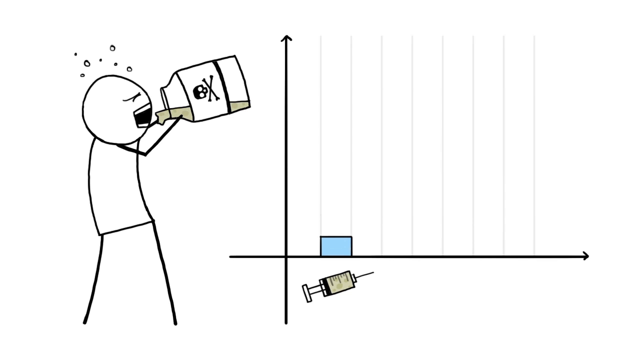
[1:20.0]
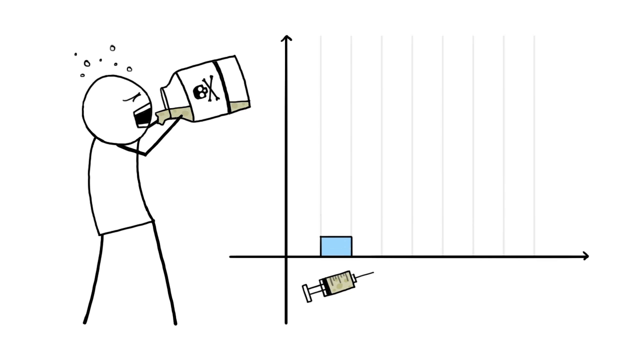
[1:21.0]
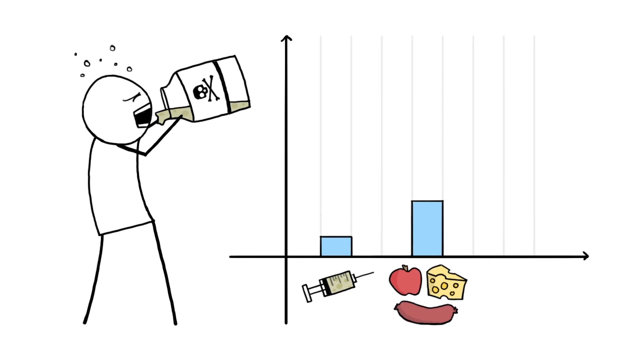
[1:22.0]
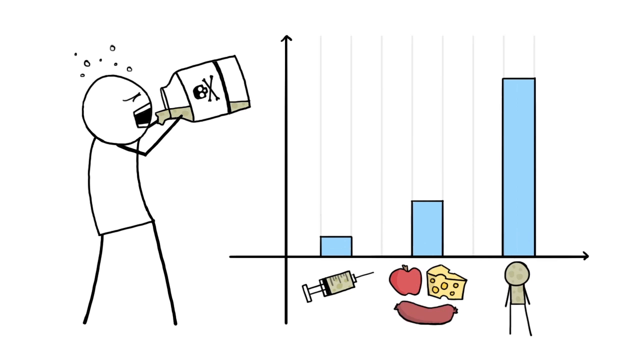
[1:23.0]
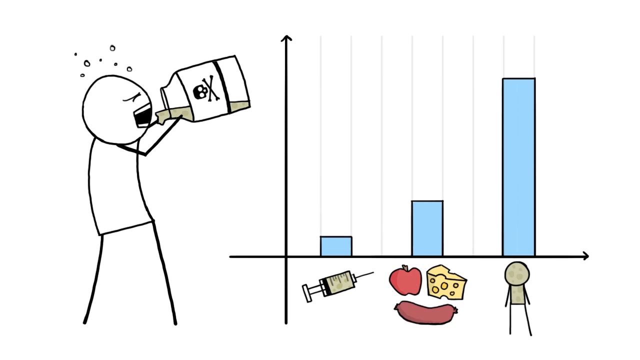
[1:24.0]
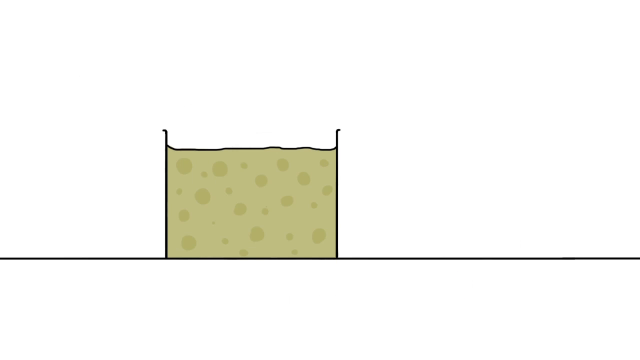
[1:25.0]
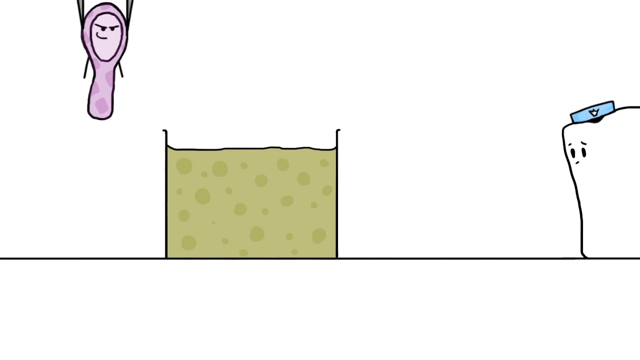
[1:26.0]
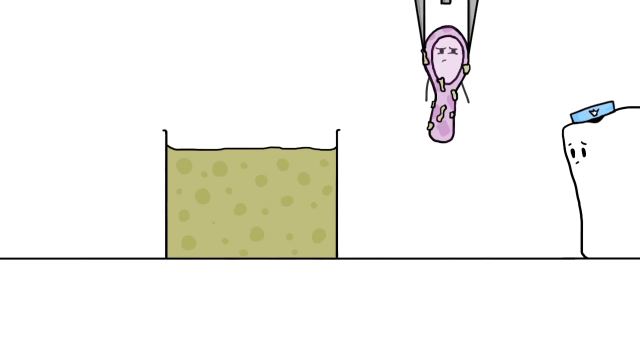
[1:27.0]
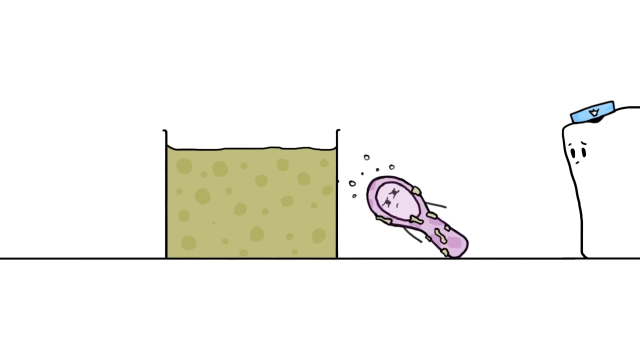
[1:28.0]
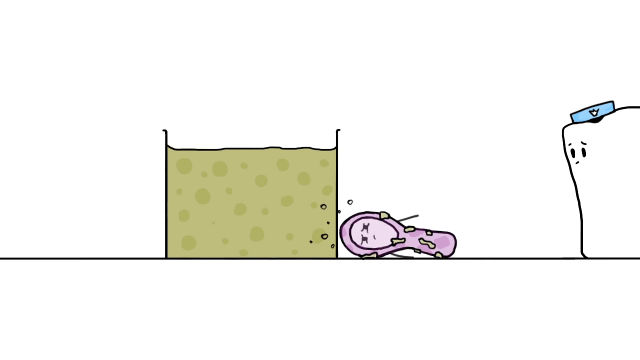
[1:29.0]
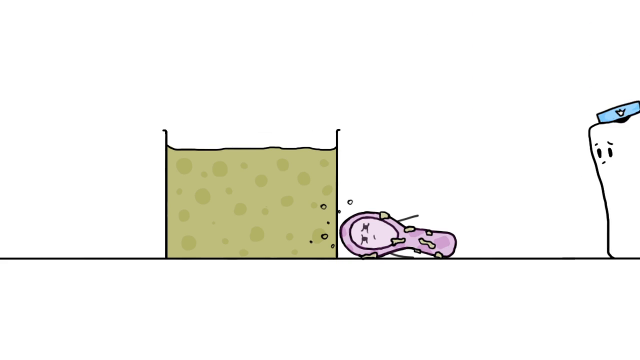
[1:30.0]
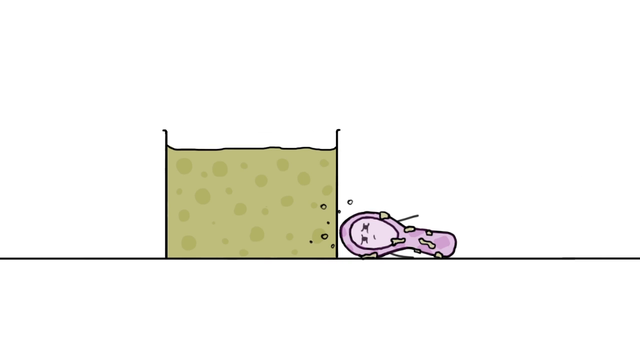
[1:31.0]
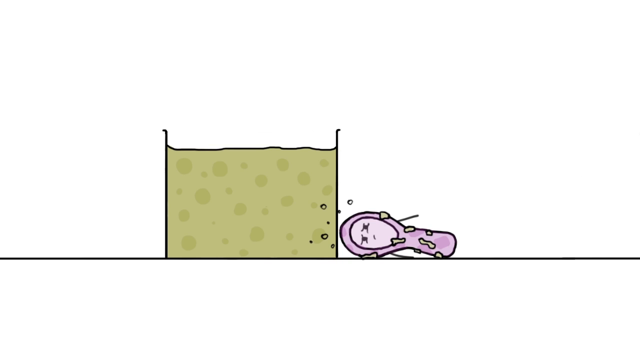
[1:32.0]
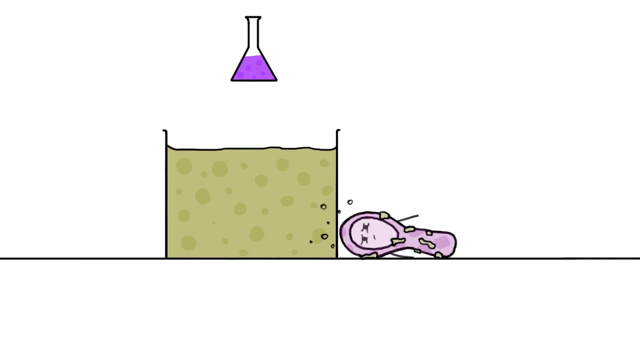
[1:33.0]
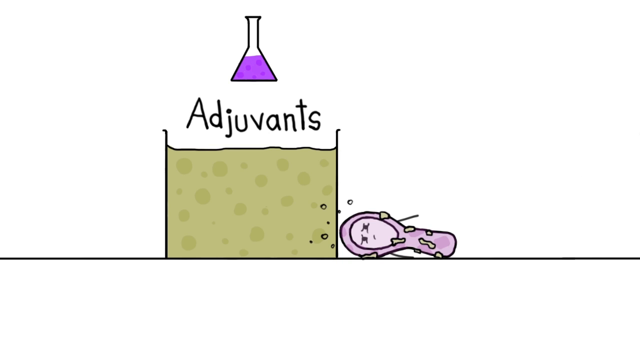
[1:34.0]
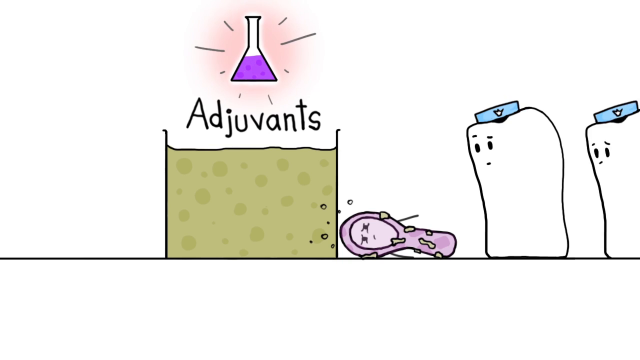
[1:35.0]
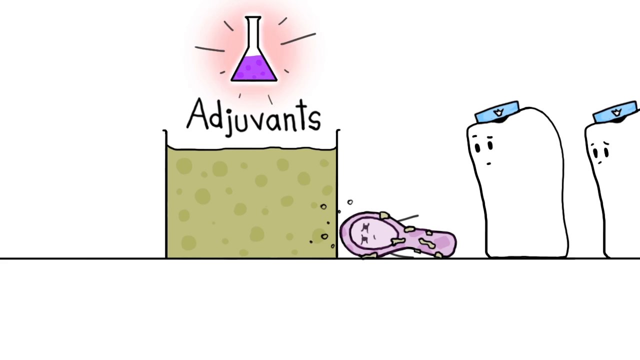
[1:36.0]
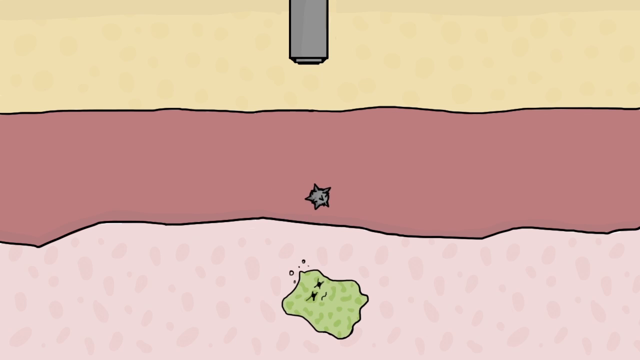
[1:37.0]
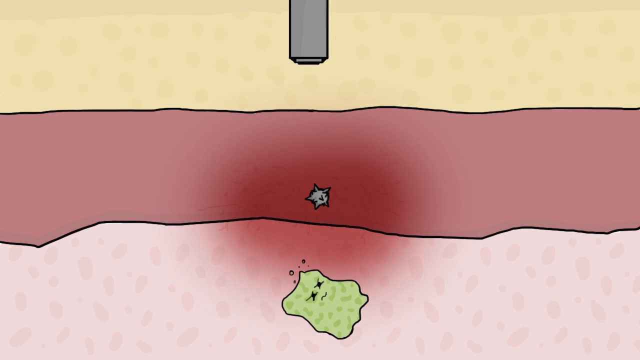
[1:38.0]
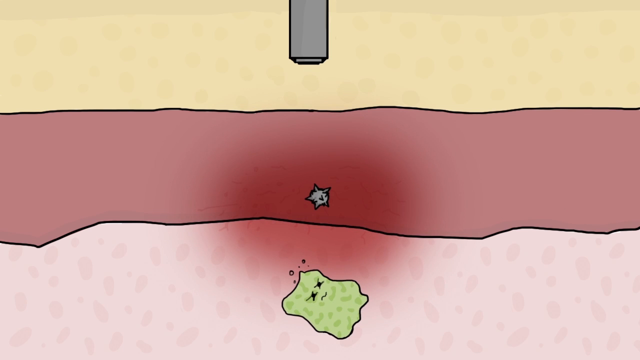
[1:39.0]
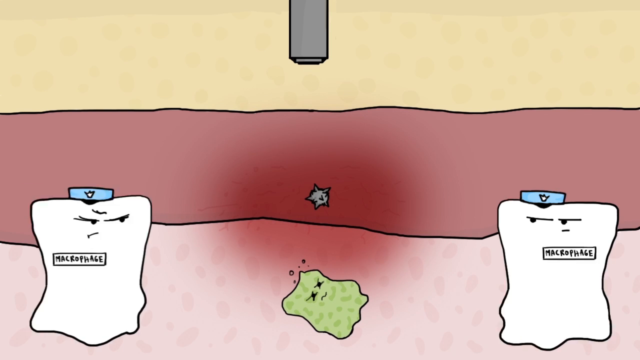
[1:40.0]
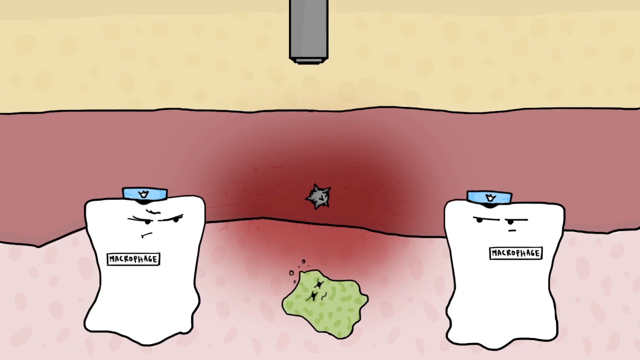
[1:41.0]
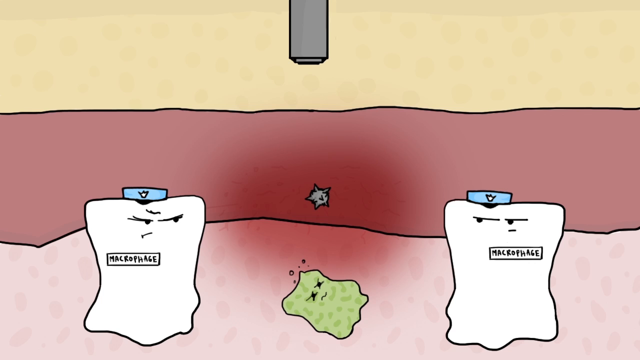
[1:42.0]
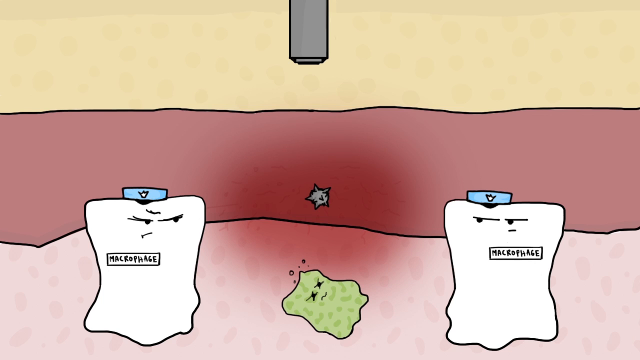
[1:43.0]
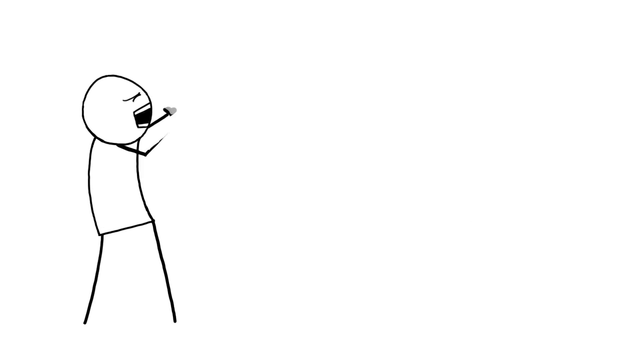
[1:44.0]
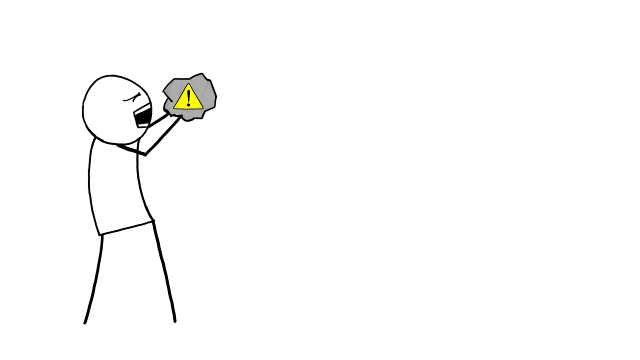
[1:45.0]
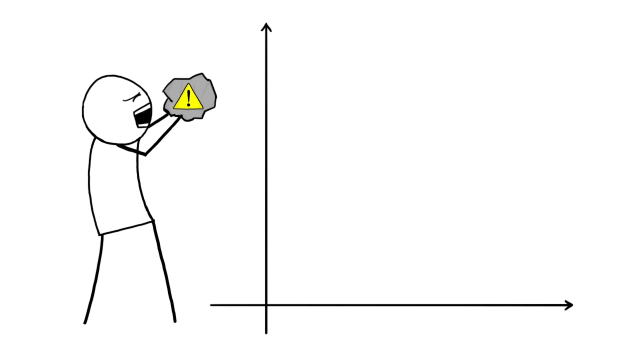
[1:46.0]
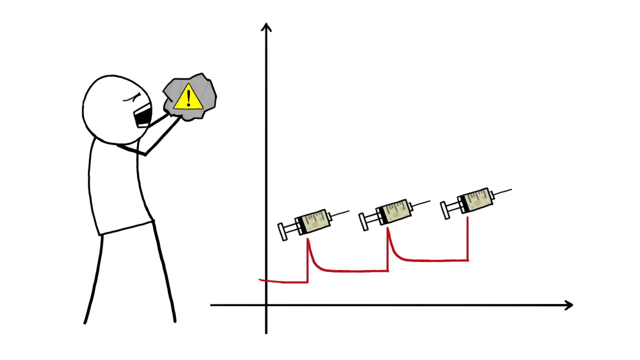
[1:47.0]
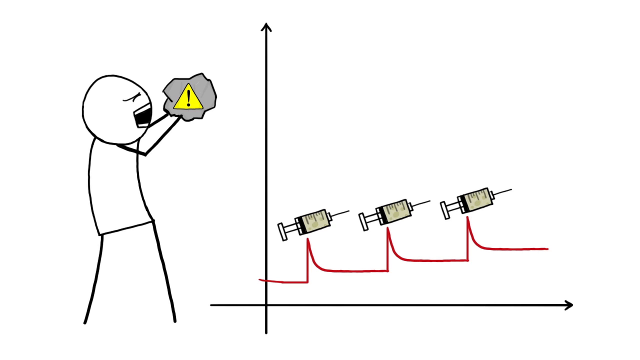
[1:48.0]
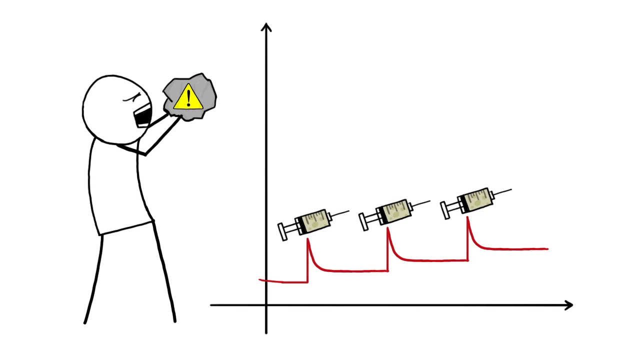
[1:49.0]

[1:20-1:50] A little stick man drinks a bottle of poison with green liquid. A chart on the right-hand side shows a syringe with the least amount, food with the middle amount and a person with the most amount; the food is an apple, cheese and a sausage. A little purple man is picked up and thrown into a beaker of green liquid, which seems to kill him, as he lies down. A little security man in a blue hat on the right-hand side watches it all. A purple beaker appears with the word "ADJUVANTS", it flashes red, and two security men come, both wearing blue hats. A little green germ seems to have fallen through a grey pipe and seems to be dead, while two security men with blue hats watch him; each has the name "Macrophage" on them. A little stick man picks up a grey object that looks like a rock, with a yellow exclamation mark in the middle, and on the right-hand side a chart with three syringes goes up and up.